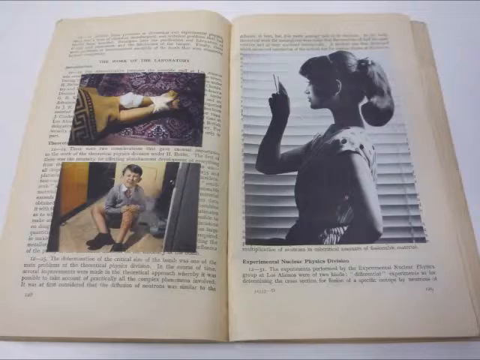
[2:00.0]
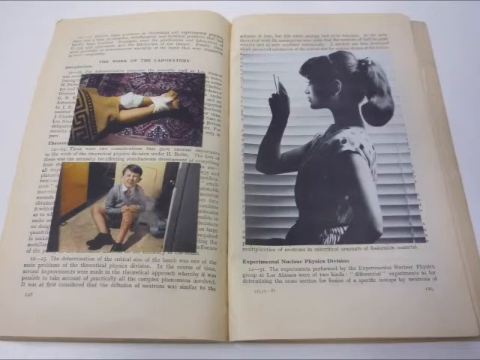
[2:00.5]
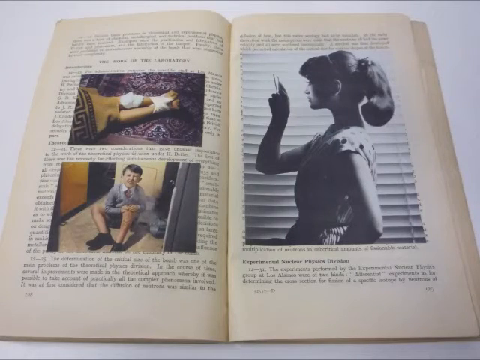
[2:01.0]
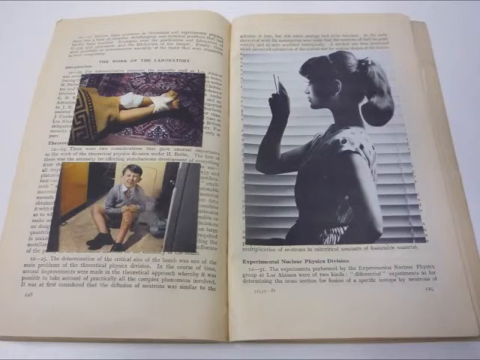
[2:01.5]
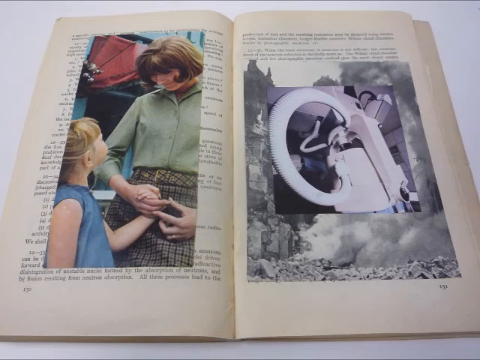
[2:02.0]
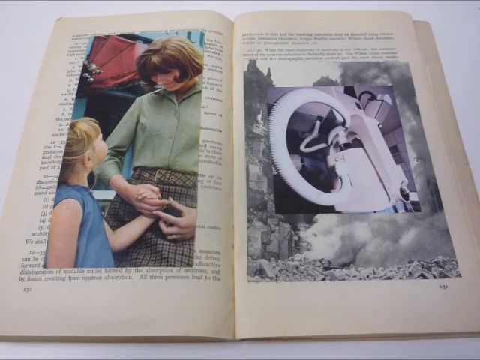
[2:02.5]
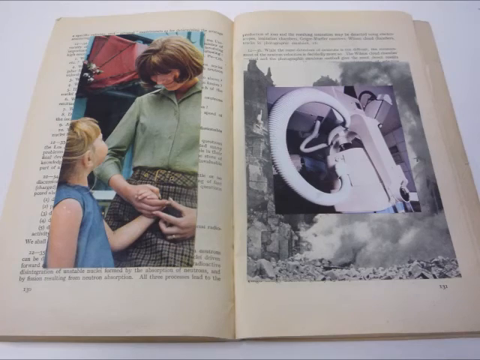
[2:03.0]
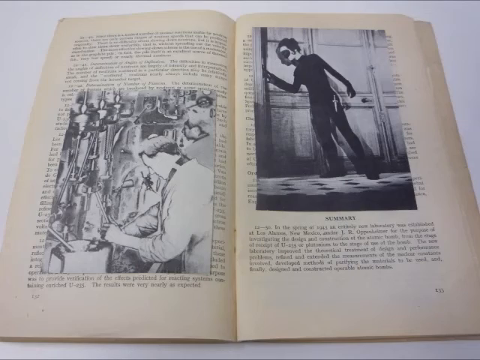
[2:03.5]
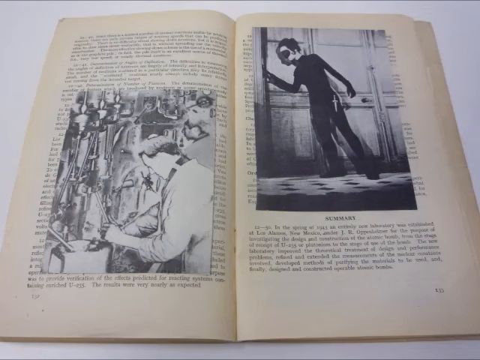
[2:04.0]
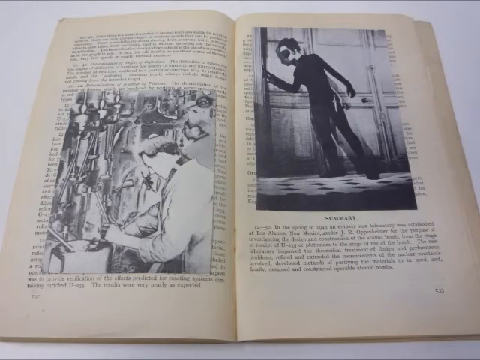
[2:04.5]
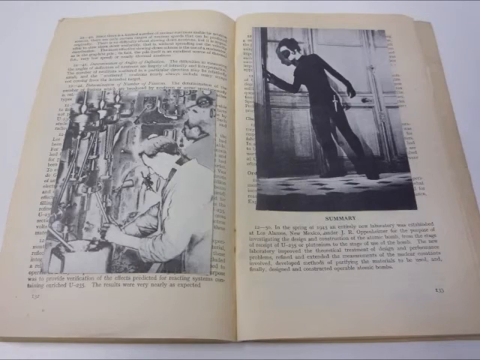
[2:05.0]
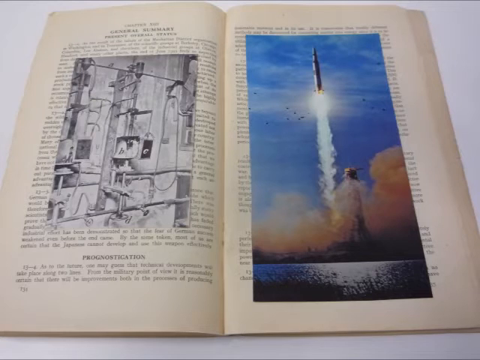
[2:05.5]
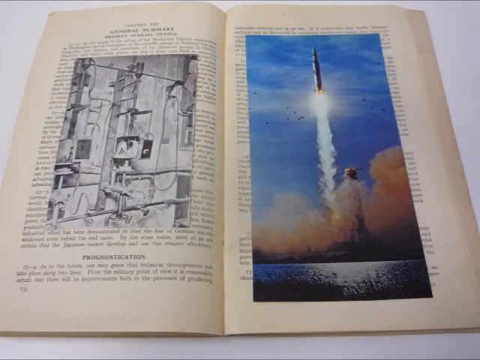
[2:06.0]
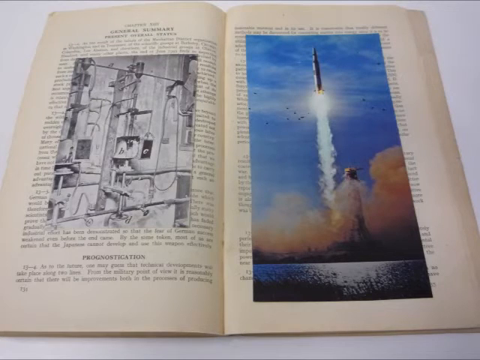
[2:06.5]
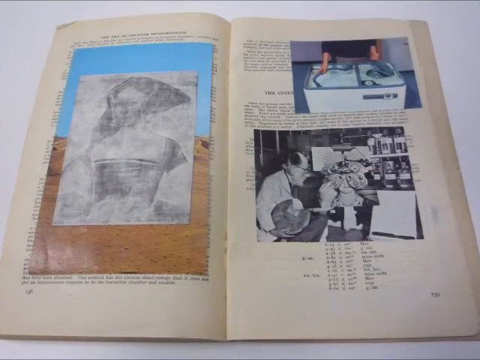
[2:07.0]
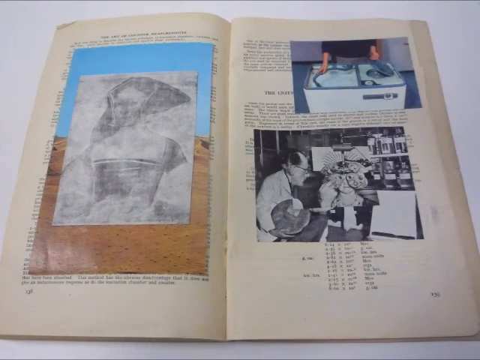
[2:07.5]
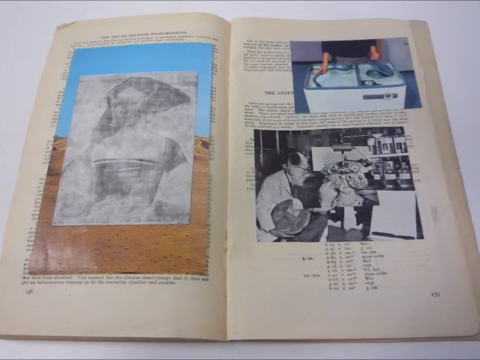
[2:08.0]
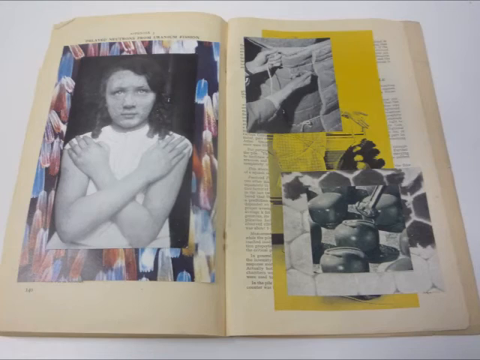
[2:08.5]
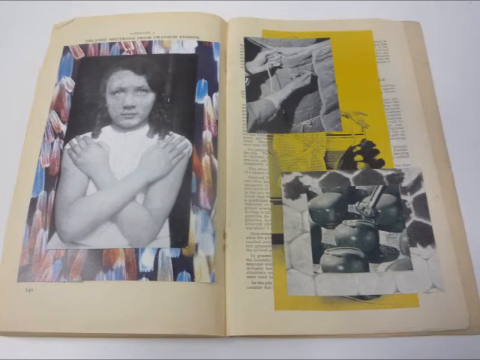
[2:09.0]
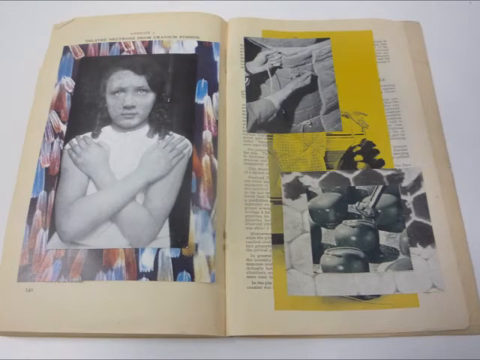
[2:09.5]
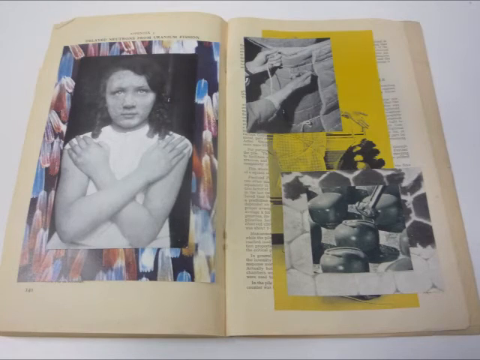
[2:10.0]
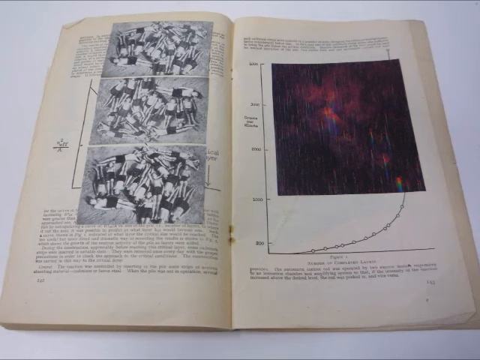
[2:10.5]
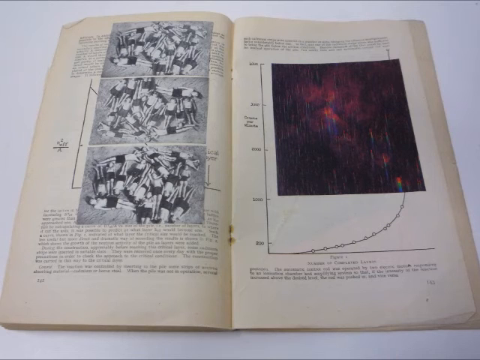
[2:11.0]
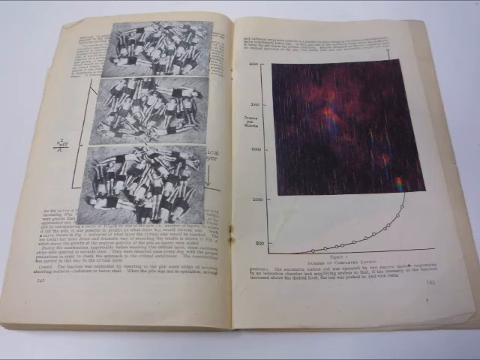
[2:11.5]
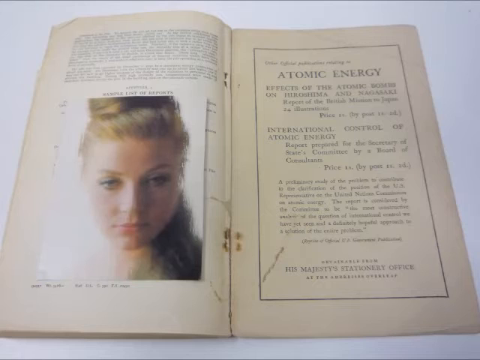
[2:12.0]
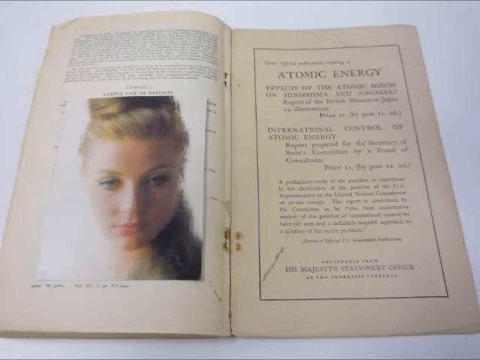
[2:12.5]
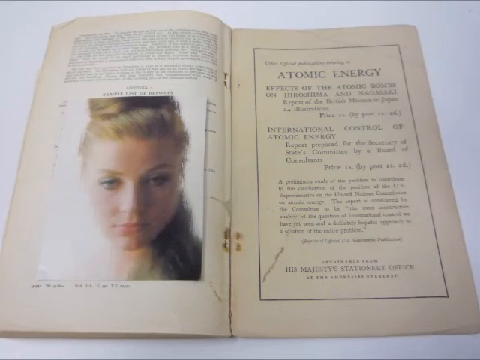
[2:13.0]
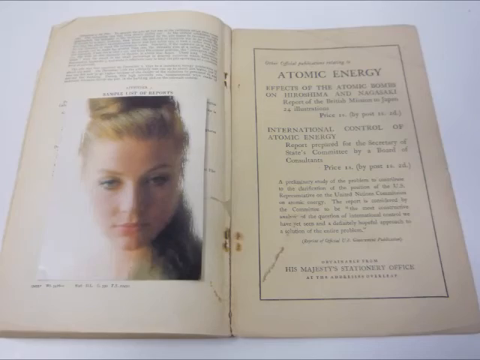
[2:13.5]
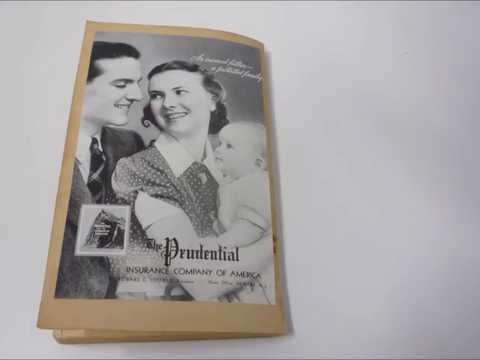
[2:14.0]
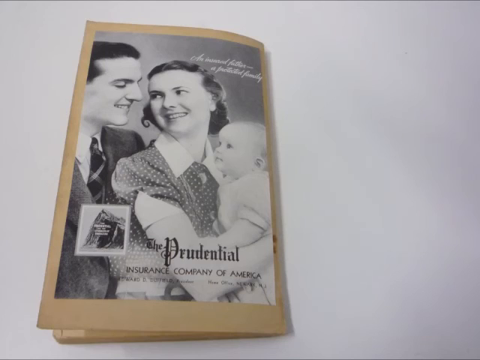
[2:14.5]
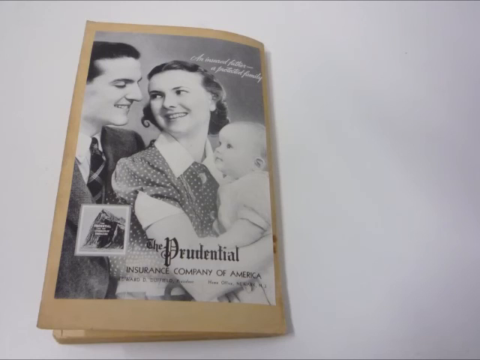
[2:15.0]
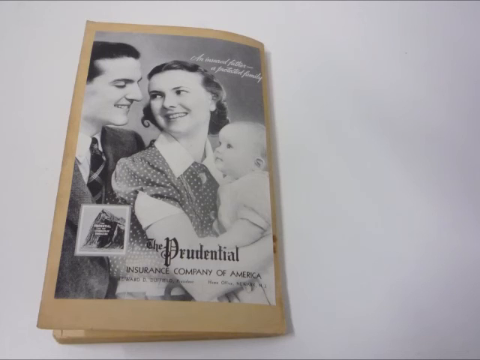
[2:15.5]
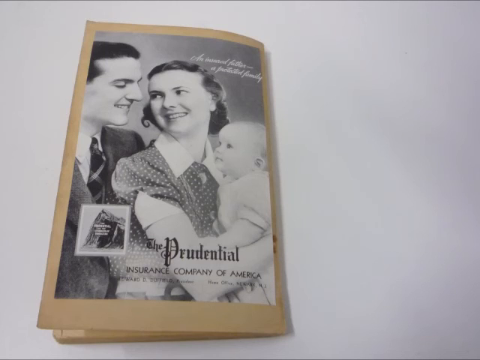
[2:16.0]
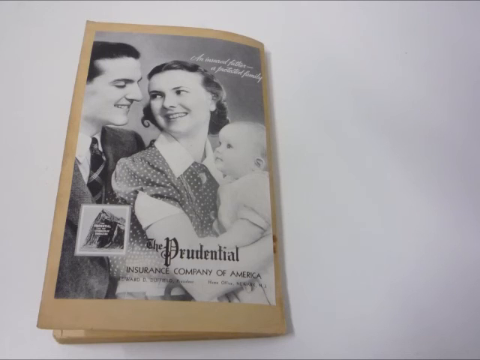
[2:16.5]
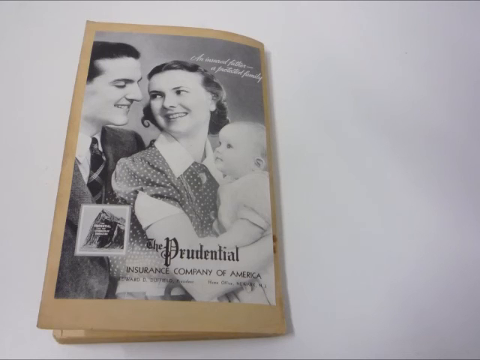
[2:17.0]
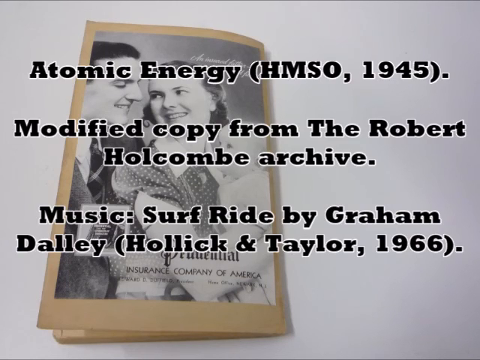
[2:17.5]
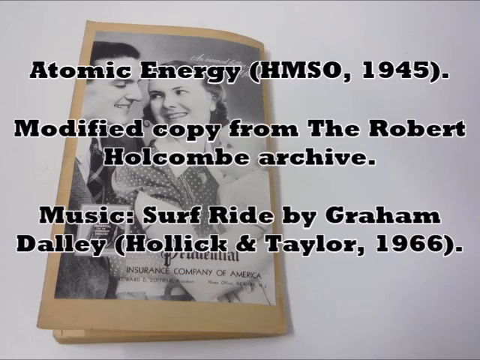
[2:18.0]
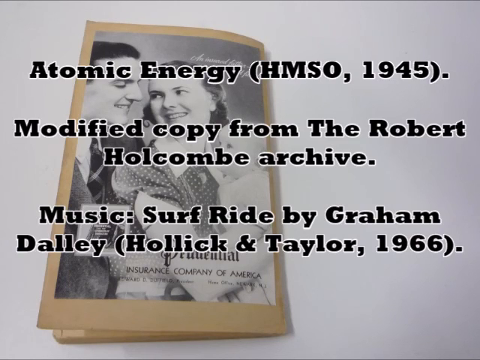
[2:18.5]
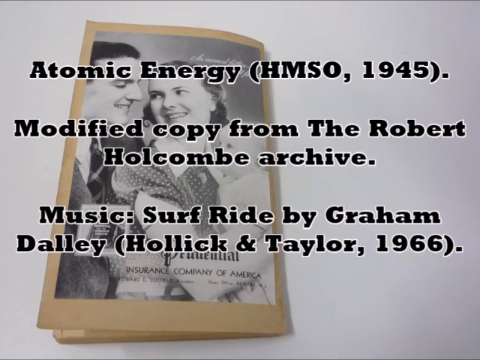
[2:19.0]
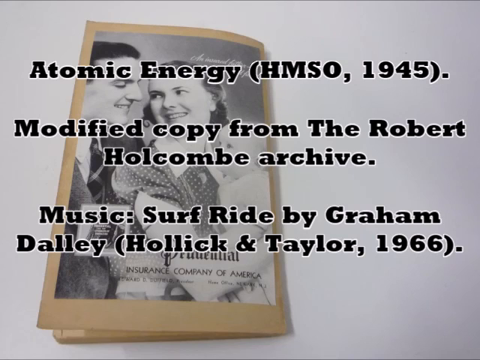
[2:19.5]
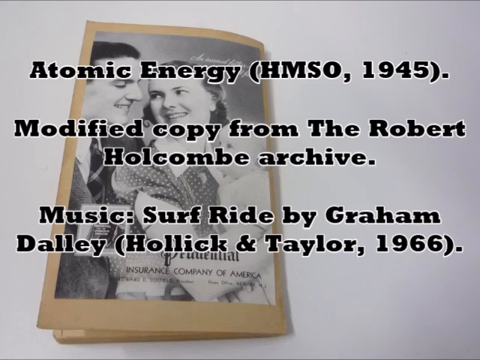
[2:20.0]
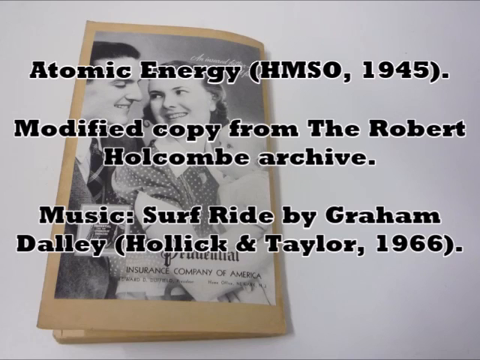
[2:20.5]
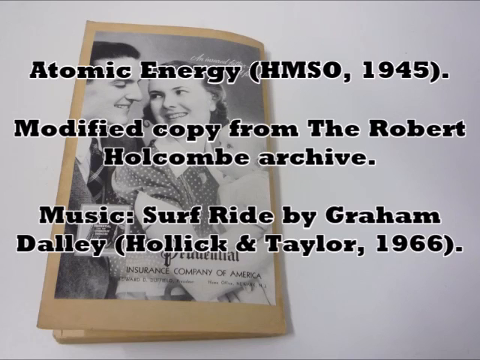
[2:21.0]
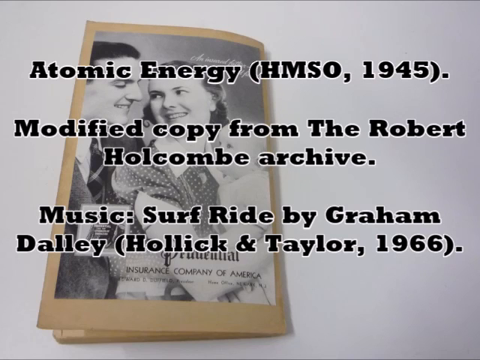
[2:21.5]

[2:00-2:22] The inside of the 1945 atomic energy leaflet has information about atomic energy, outlining production and problems. Several loose photographs have been placed on what seems to be every page shown, many not linked to atomic energy: what looks like an Elizabethan woman, possibly a photograph of a painting; early optometrist equipment being tested on a child; a close-up of a woman making a cross over her chest; a close-up of the night sky; and portraits of women. They all seem historical but not all as though taken in 1945. The back page of the leaflet shows that it was sponsored by the Prudential Insurance Company of America and has a black and white picture of a man, woman and baby.